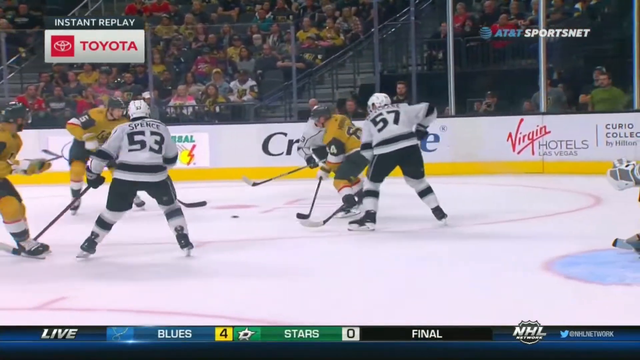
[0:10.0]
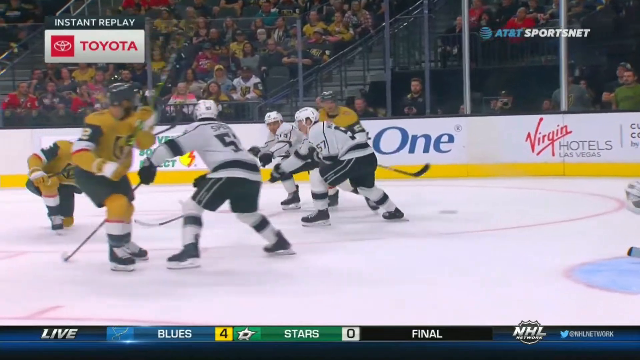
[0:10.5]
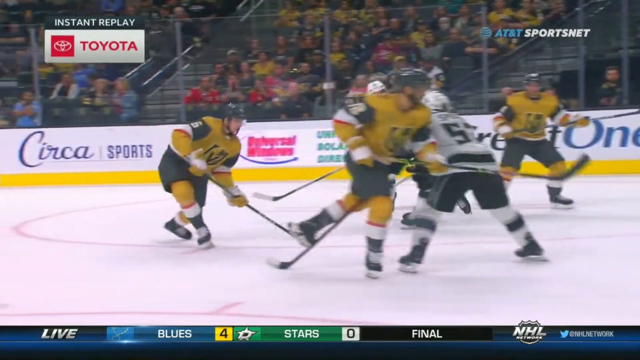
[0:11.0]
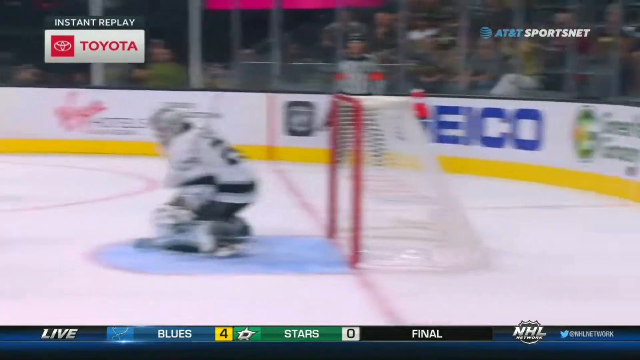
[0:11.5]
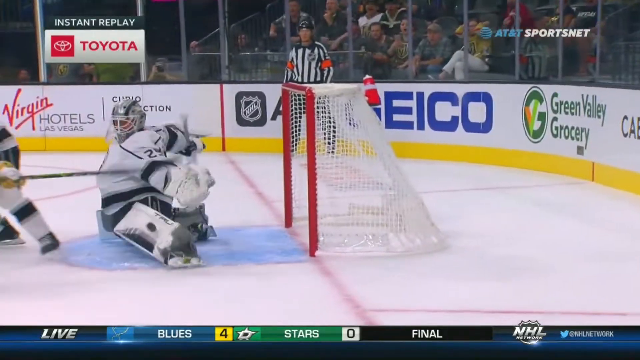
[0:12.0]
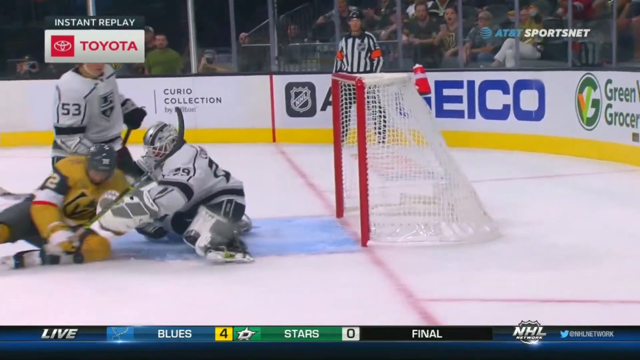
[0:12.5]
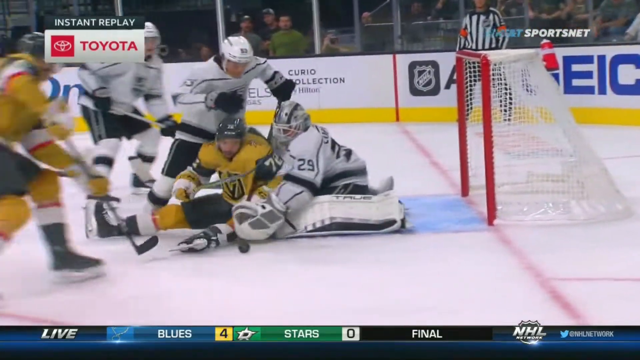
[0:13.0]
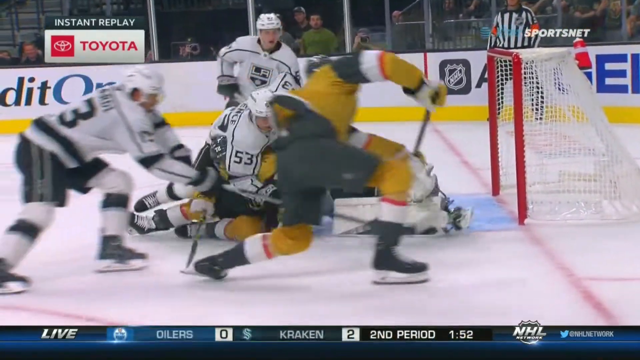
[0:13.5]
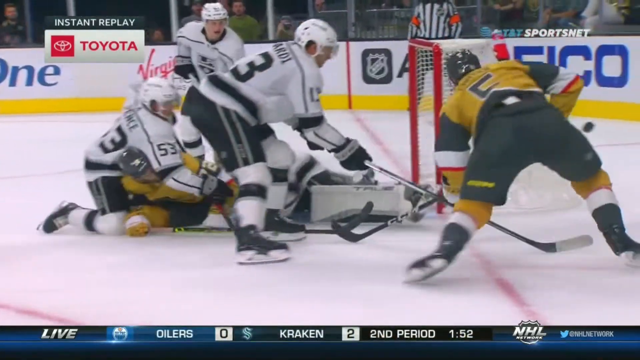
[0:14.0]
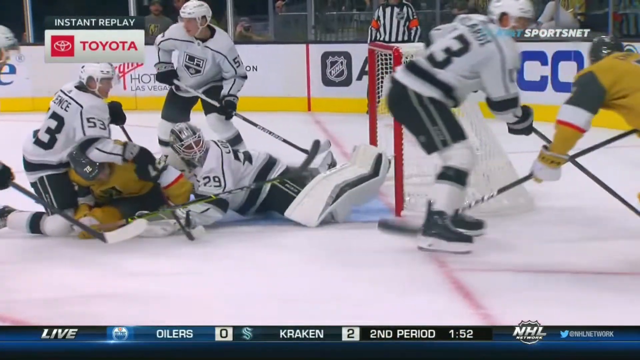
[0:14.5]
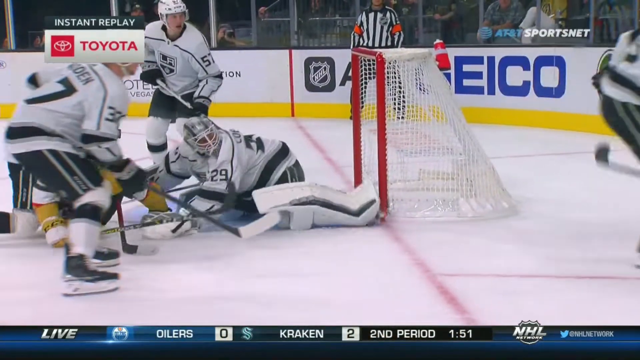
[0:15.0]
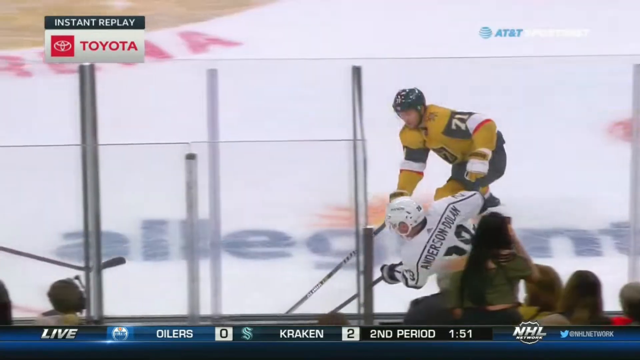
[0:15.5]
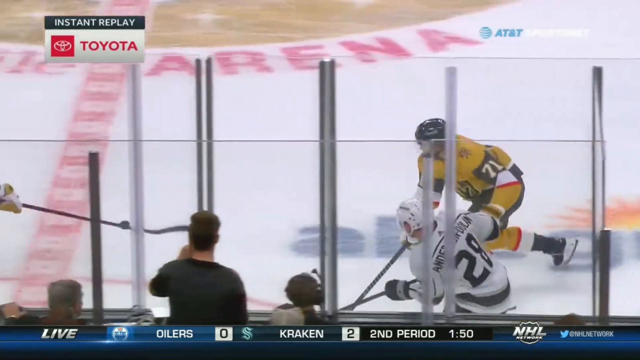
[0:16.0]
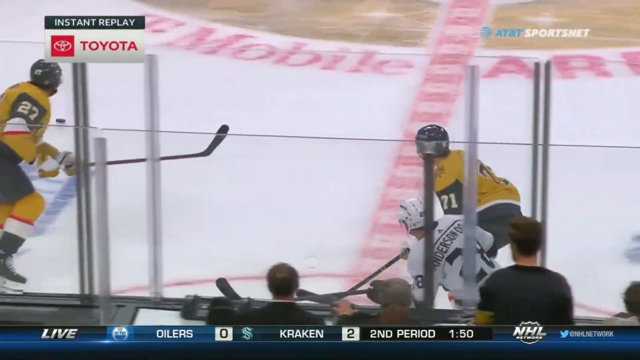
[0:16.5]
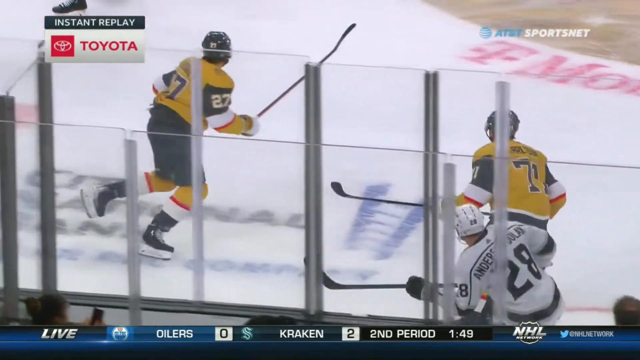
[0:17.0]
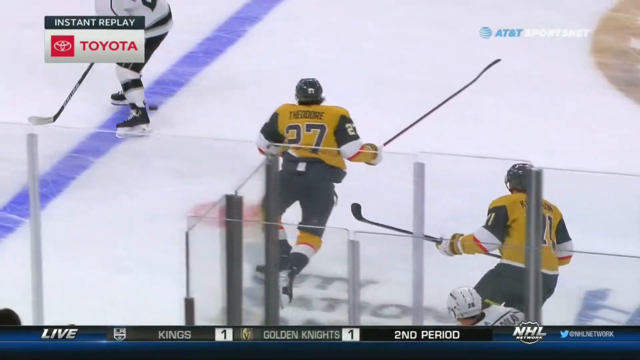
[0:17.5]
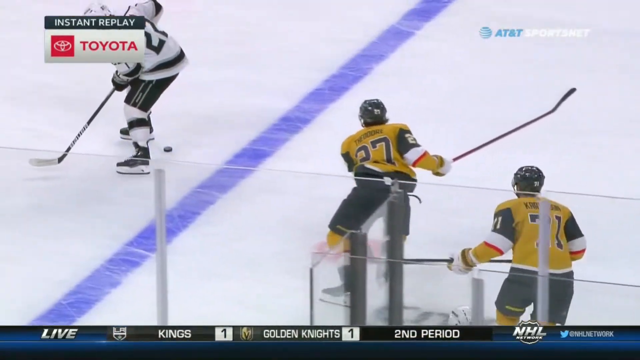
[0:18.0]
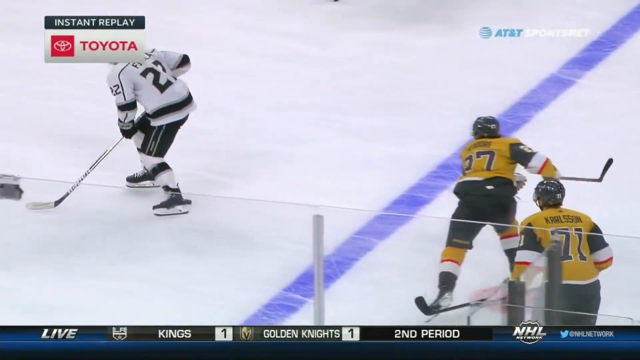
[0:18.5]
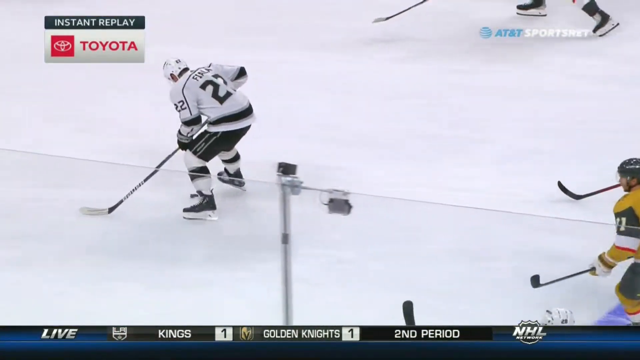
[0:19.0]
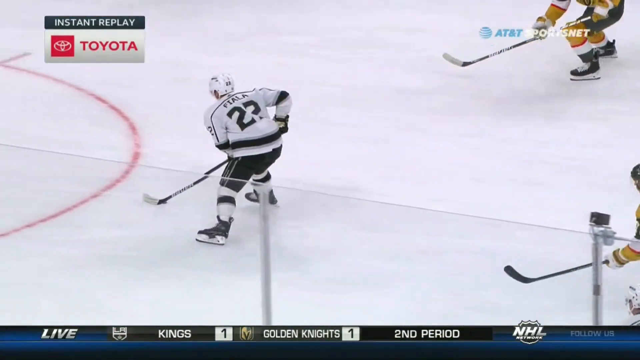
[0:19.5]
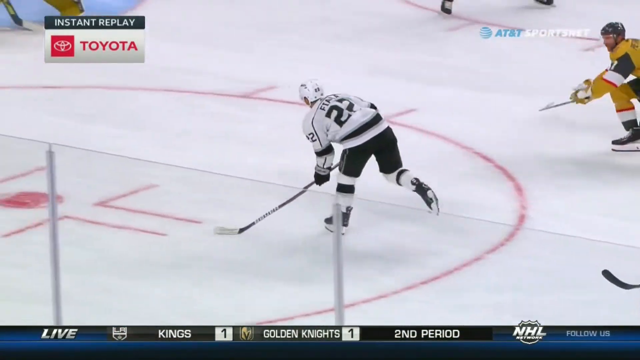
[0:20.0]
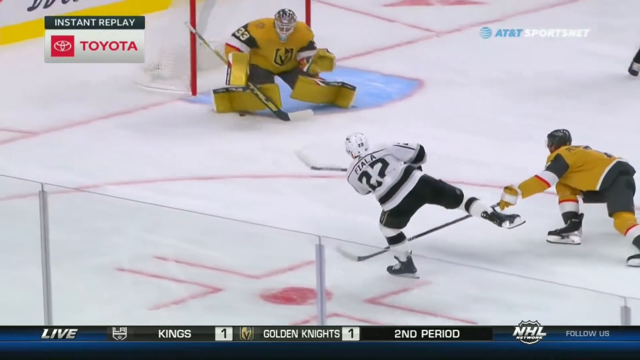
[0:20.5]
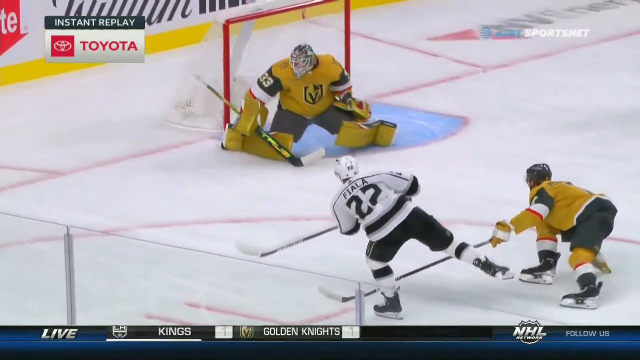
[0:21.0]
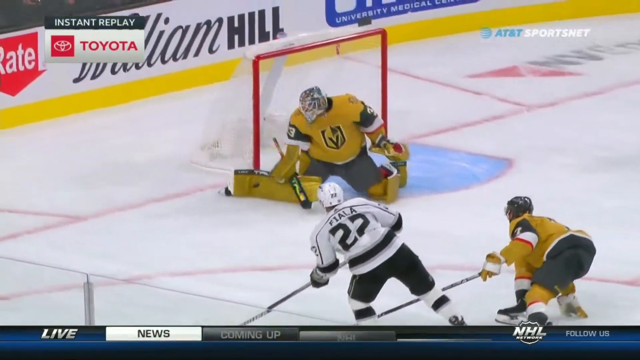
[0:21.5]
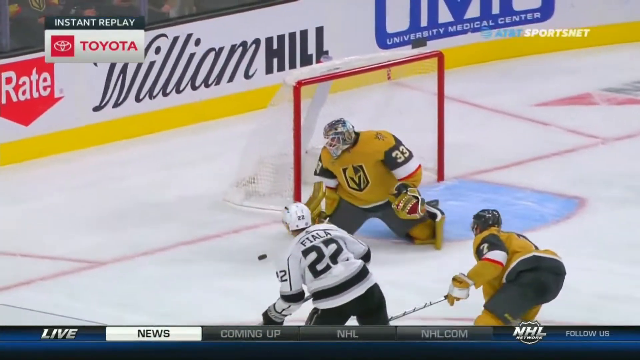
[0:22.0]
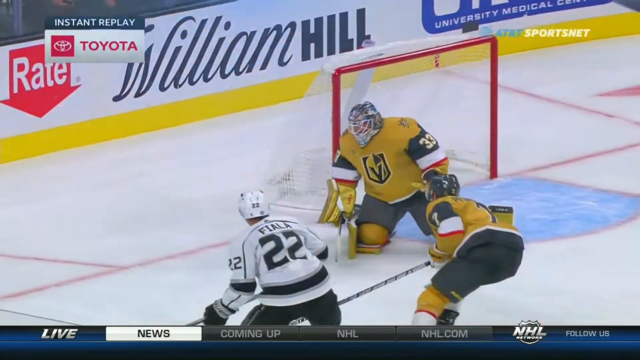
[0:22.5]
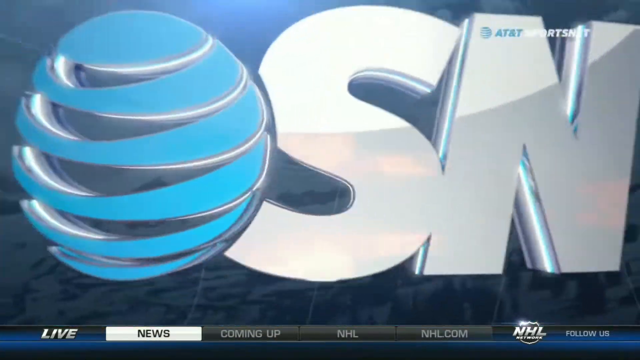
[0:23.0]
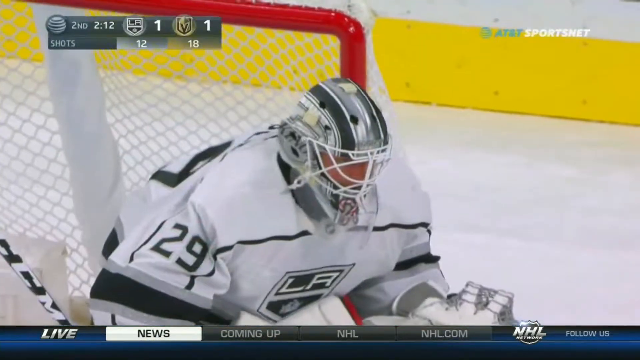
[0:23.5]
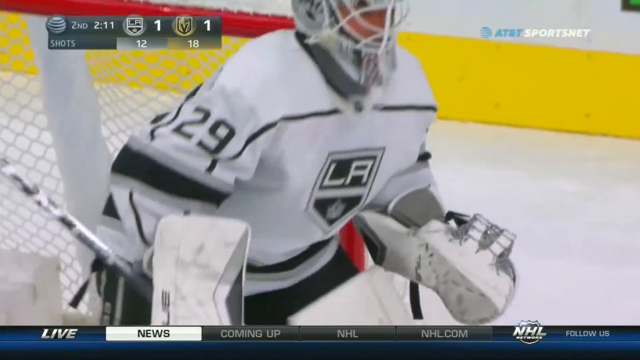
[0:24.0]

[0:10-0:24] More instant replays of shots on target follow. The yellow team has a shot, and the player who took it falls out behind the goal. The white team is then in possession, and number 22, who looks like he has the name "Fiala" on the back, takes a shot on goal that is saved by the goalie. The goalie appears to wear a lot more padding than the other team members. All players wear helmets. More sponsorship signs are visible, and William Hill, the betting company, is behind the yellow team's goal.